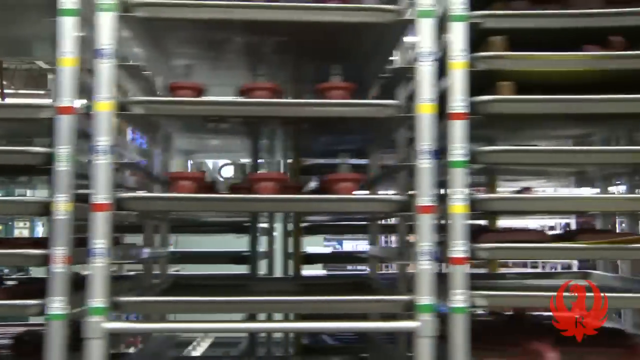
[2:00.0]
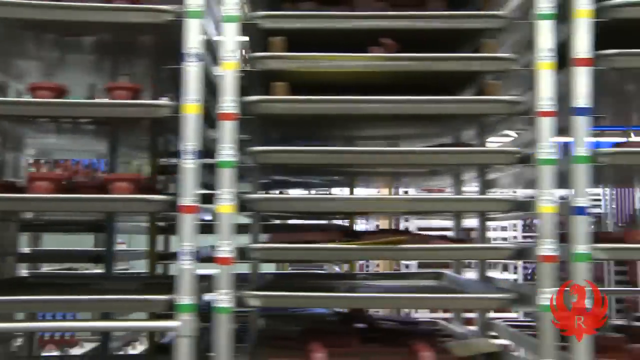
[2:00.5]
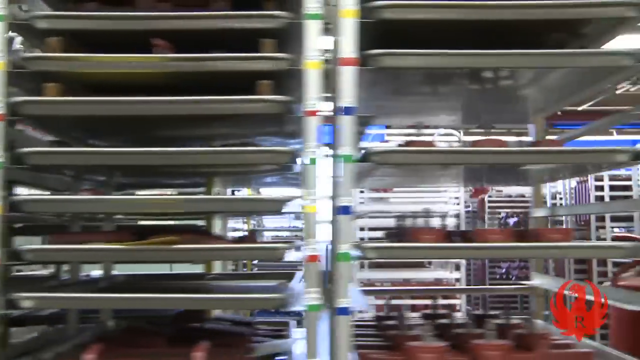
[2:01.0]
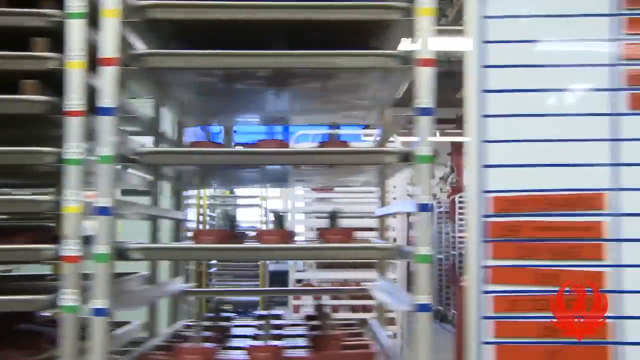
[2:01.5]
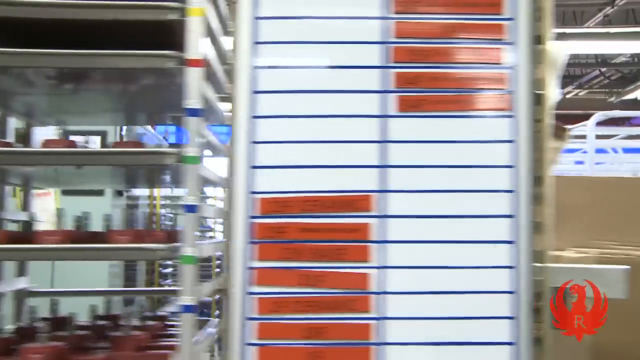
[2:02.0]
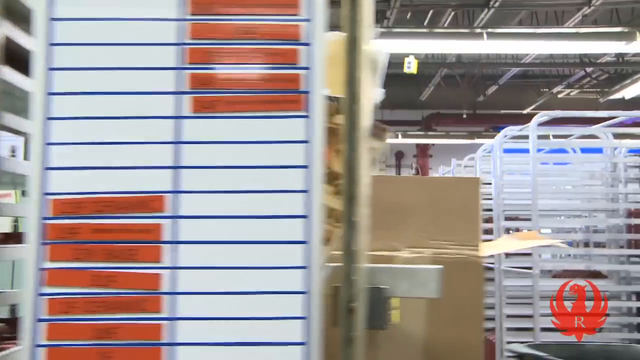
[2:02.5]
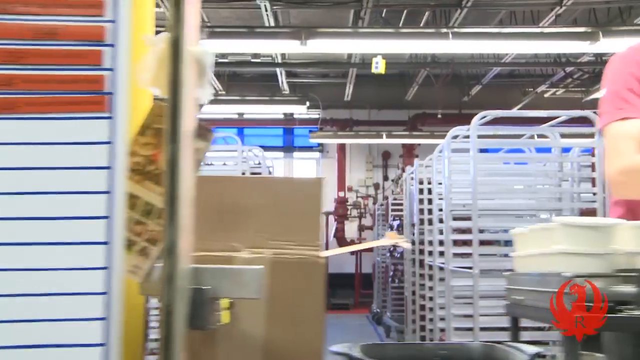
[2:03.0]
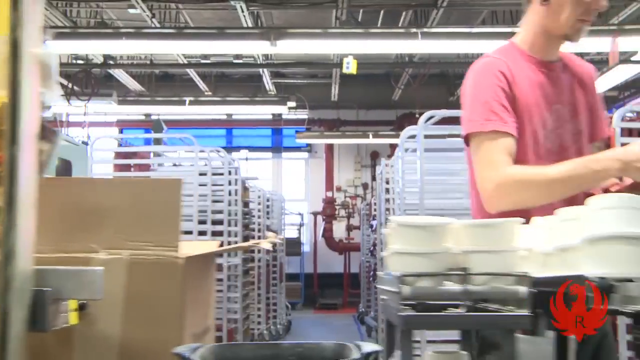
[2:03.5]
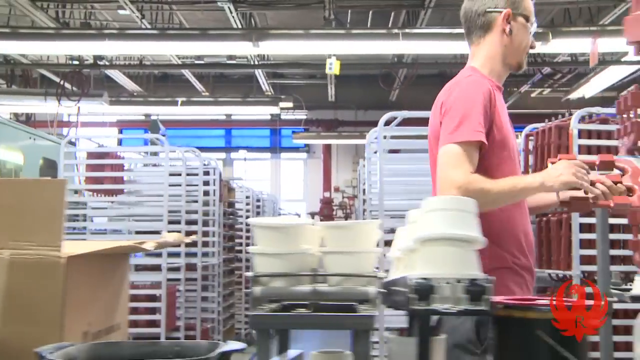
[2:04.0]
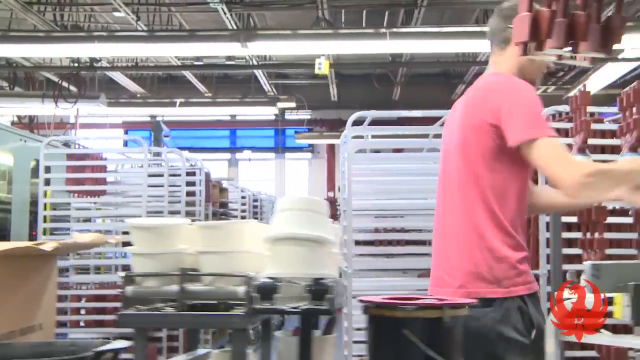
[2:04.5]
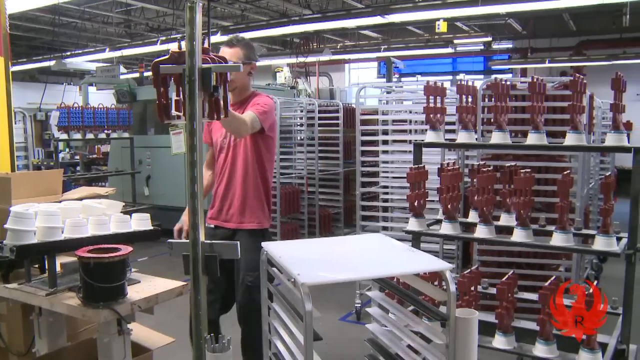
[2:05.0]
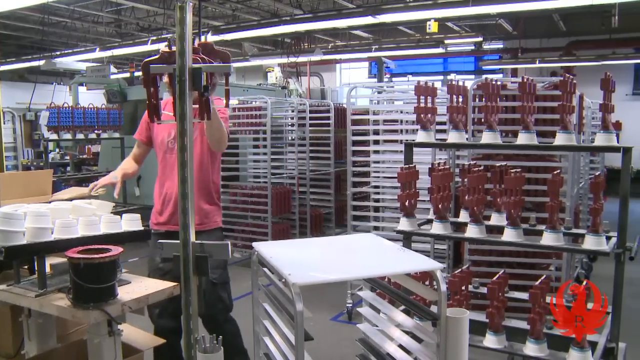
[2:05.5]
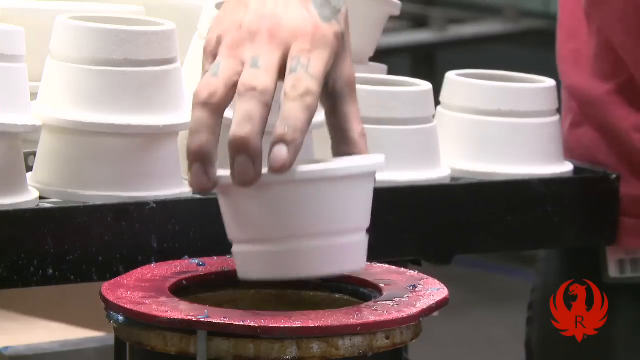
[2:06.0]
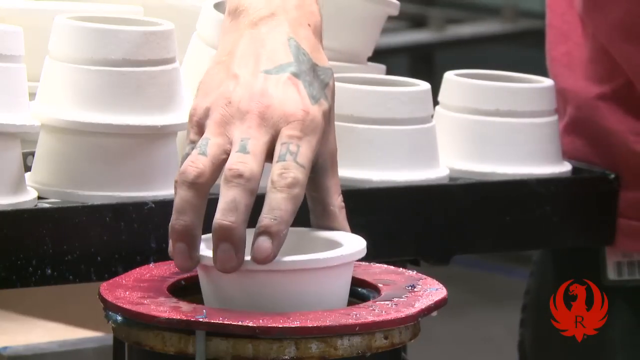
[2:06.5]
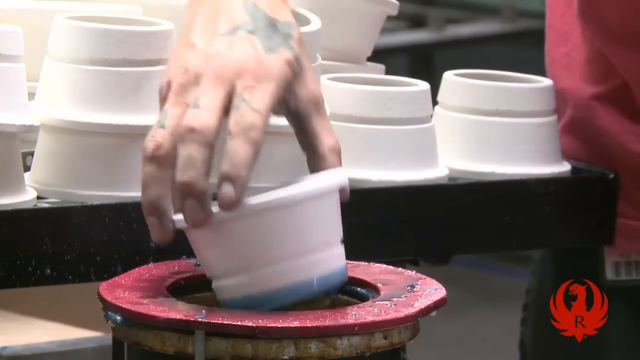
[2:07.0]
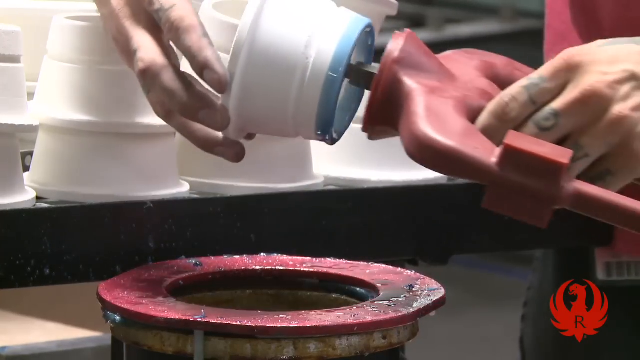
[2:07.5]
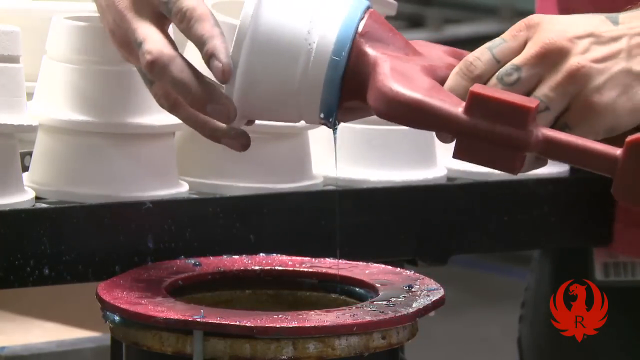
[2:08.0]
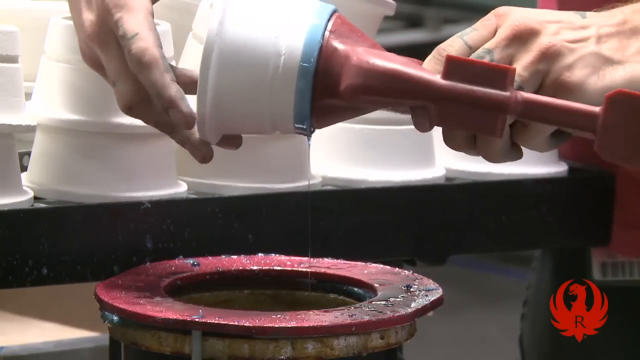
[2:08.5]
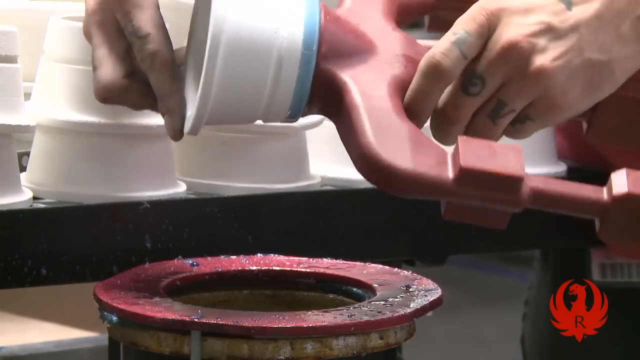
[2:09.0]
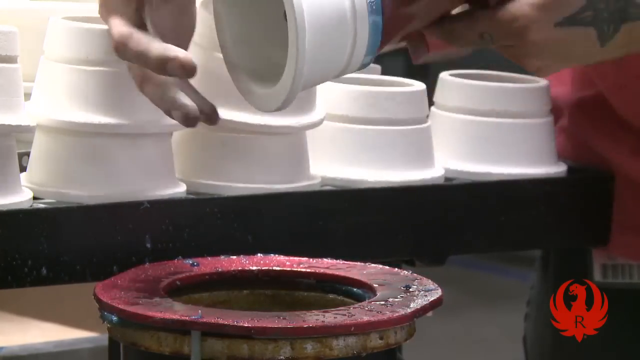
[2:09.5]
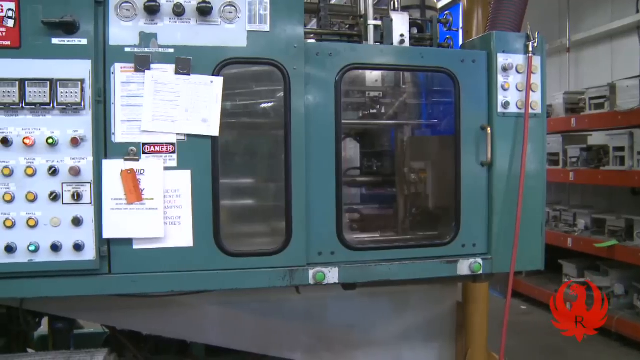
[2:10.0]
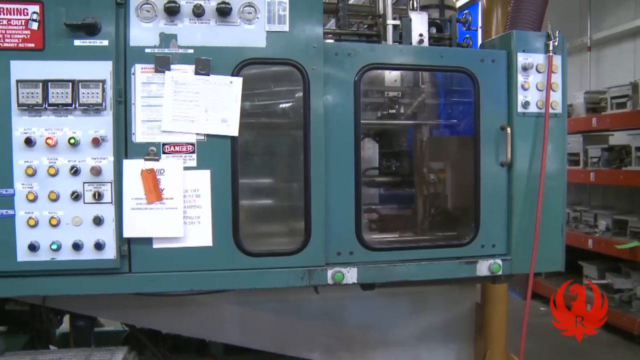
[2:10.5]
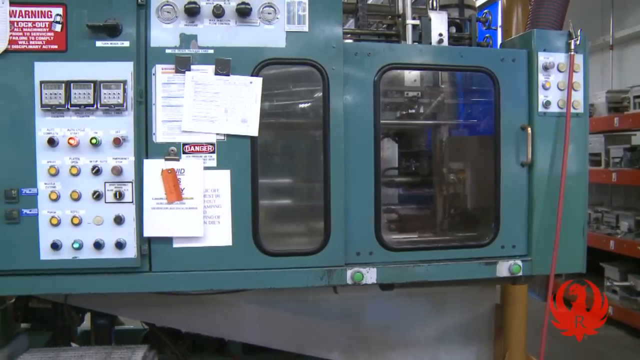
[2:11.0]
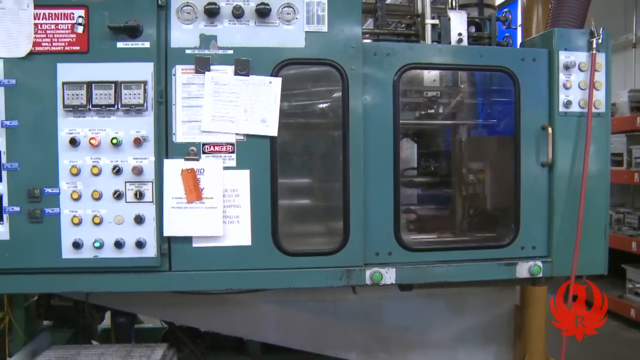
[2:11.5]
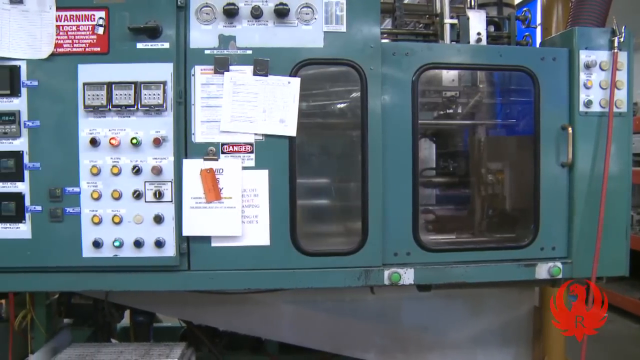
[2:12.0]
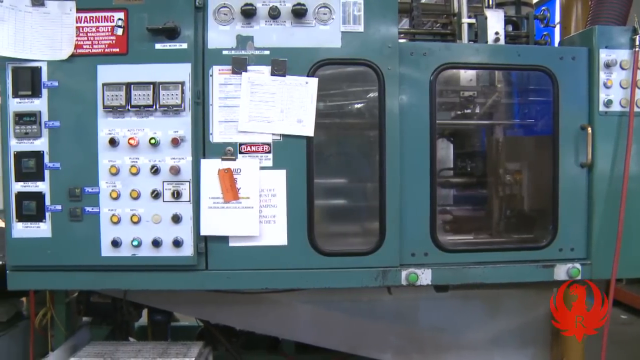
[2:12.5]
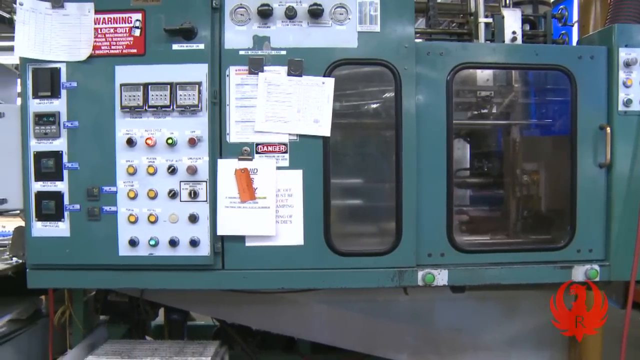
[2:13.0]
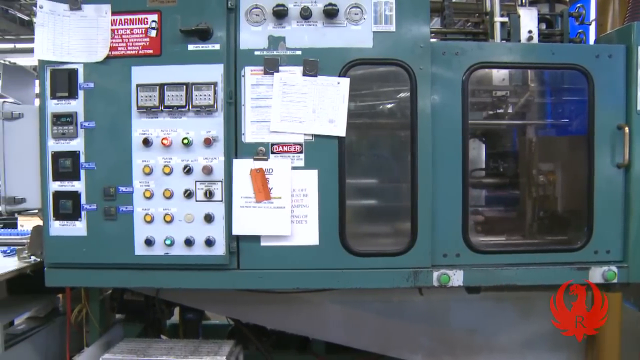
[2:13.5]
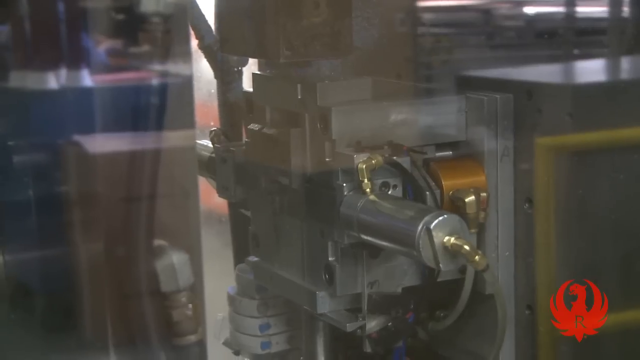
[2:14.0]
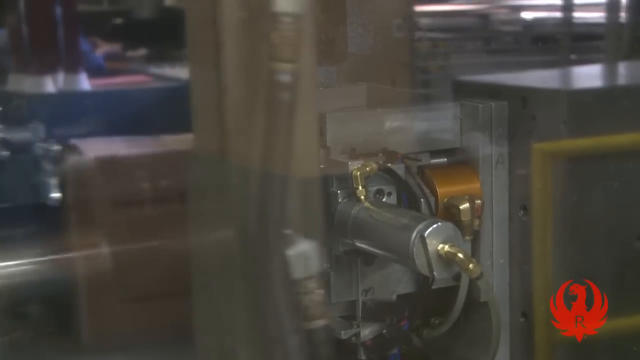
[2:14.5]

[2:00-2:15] More of the bakery trays appear as the Ruger how it's made wax molds video continues, apparently showing how the wax molds are made. There is machinery, and a man dips some white pot-looking things in the blue wax and then puts them on a red thing that looks like it may also be wax. The man wears a red shirt and has plenty of machinery around him.